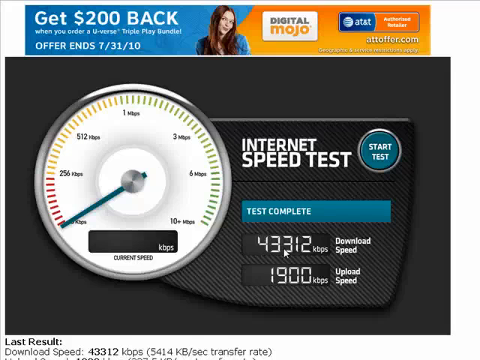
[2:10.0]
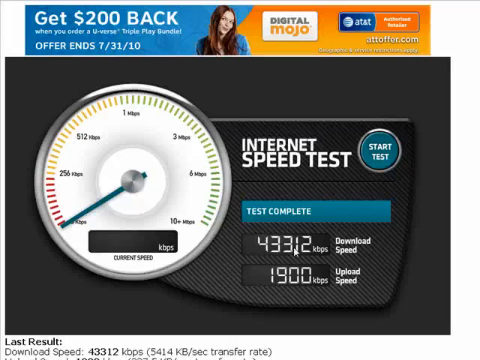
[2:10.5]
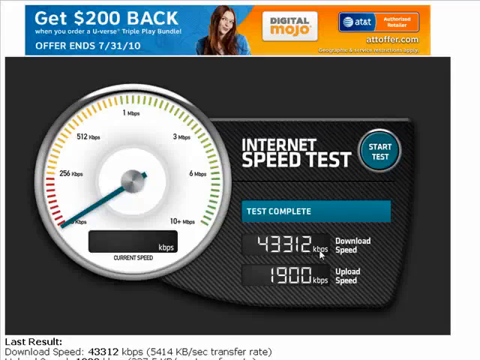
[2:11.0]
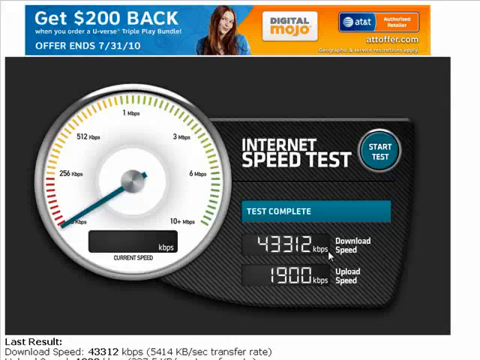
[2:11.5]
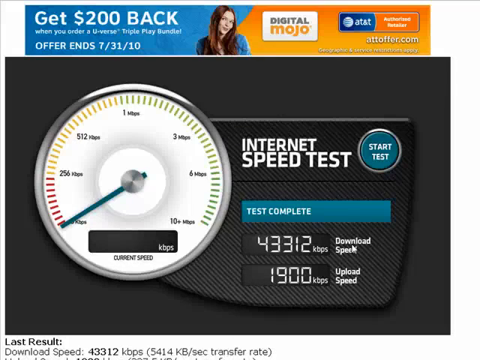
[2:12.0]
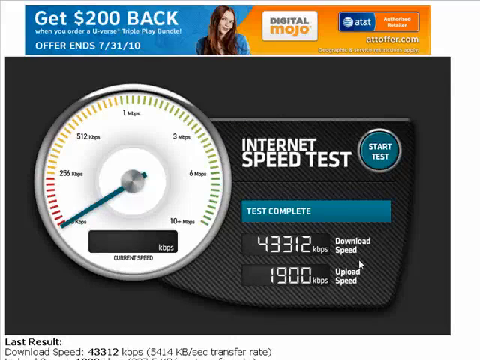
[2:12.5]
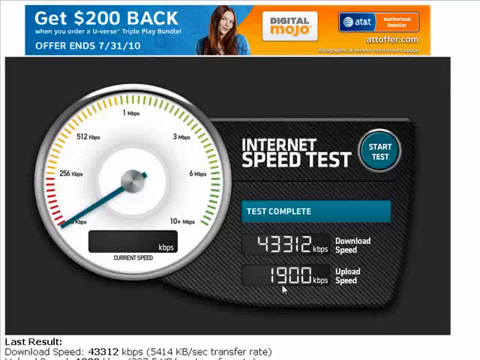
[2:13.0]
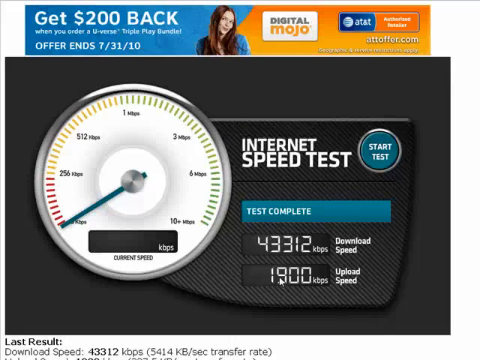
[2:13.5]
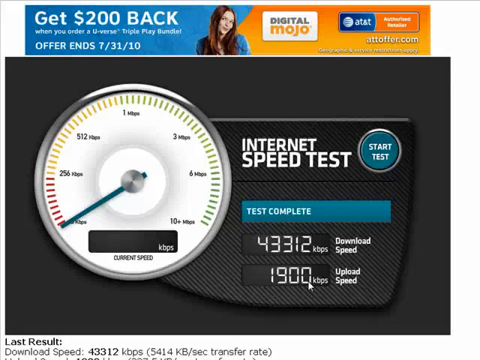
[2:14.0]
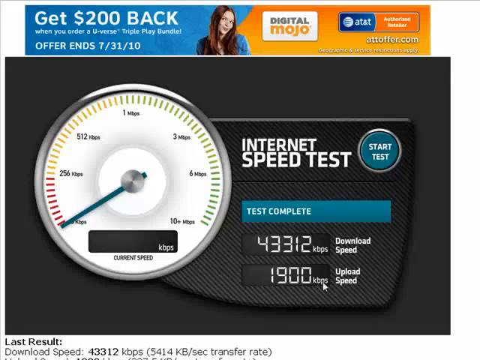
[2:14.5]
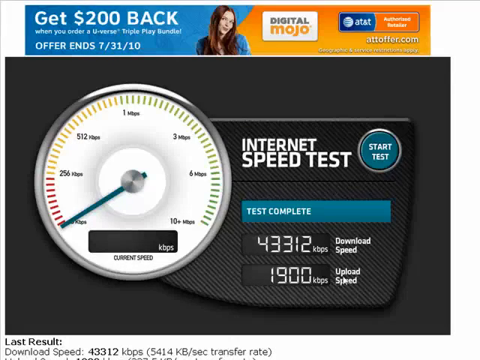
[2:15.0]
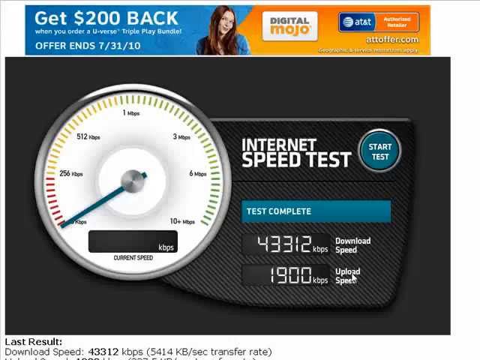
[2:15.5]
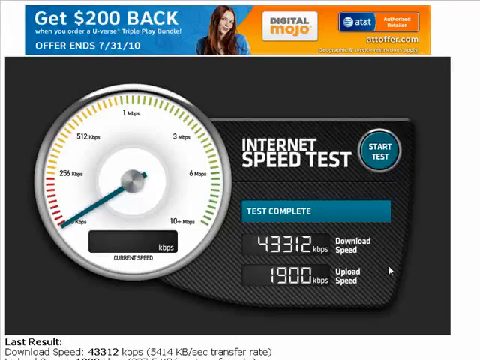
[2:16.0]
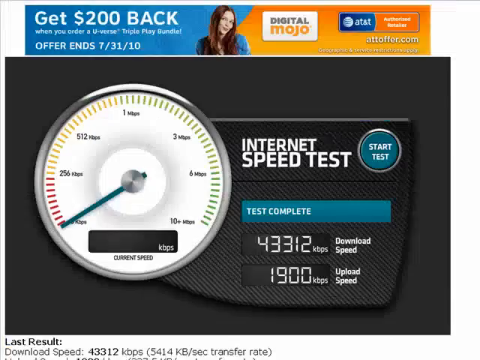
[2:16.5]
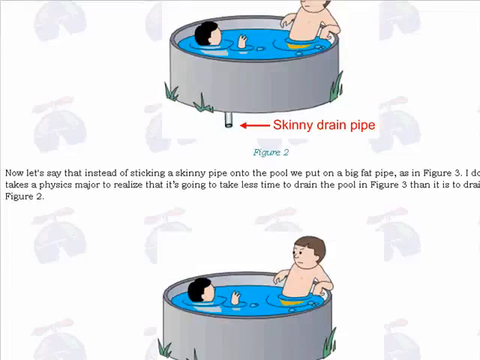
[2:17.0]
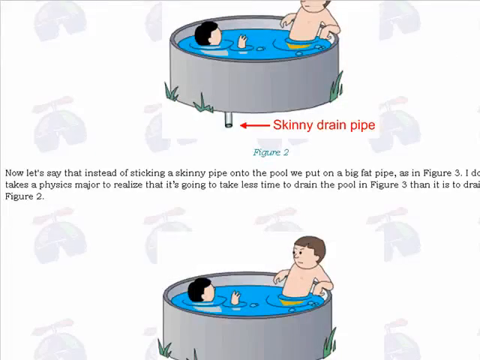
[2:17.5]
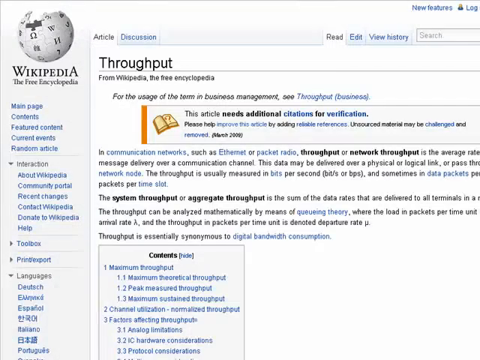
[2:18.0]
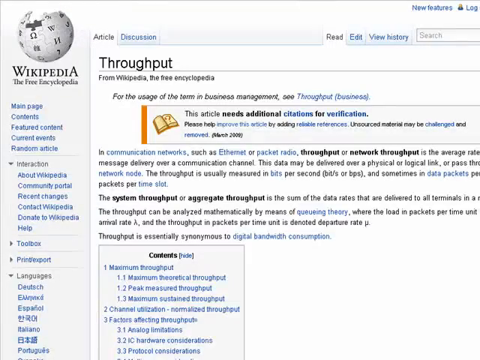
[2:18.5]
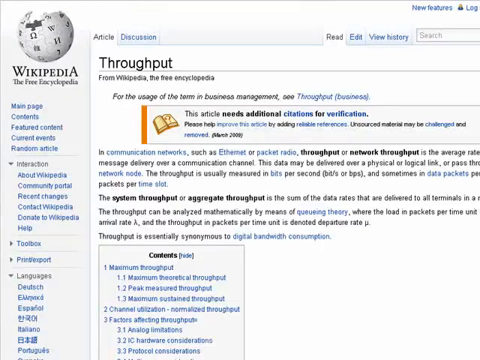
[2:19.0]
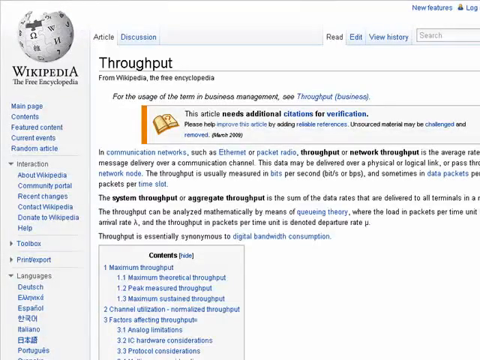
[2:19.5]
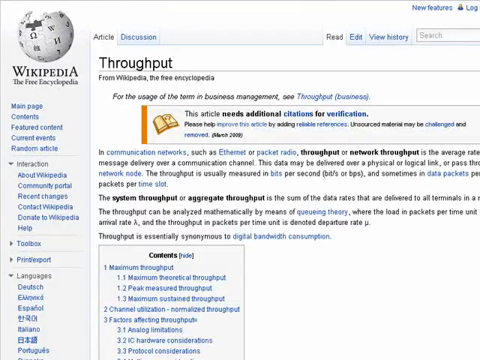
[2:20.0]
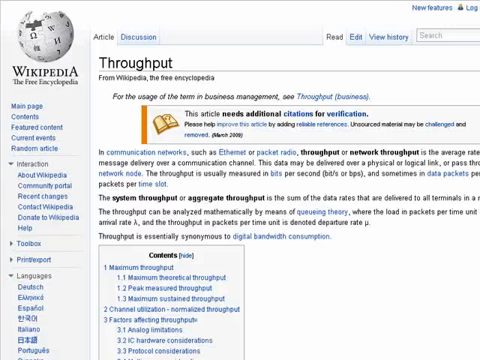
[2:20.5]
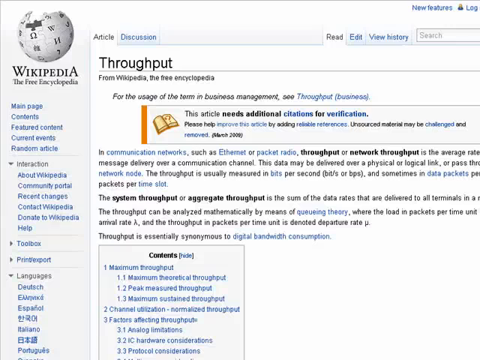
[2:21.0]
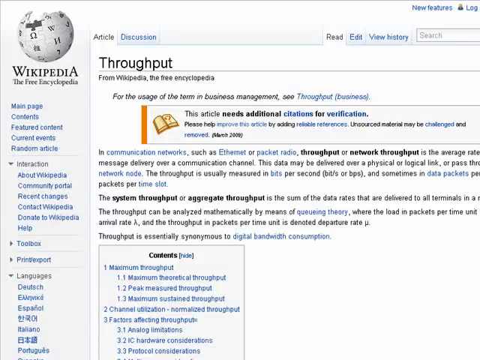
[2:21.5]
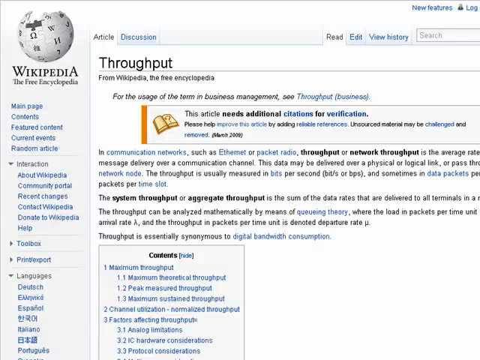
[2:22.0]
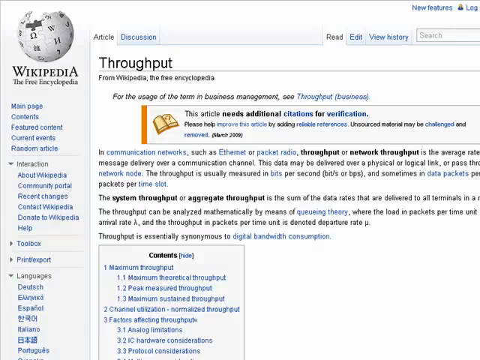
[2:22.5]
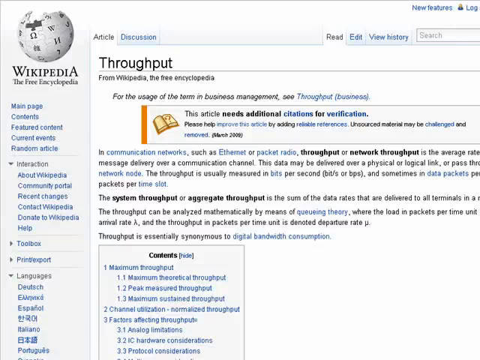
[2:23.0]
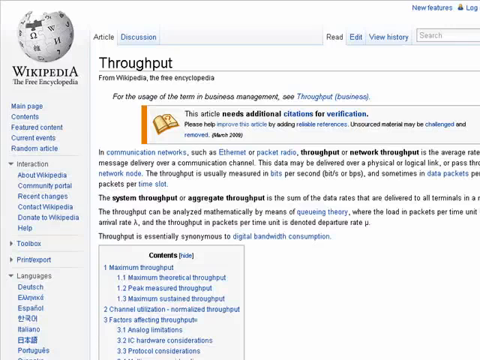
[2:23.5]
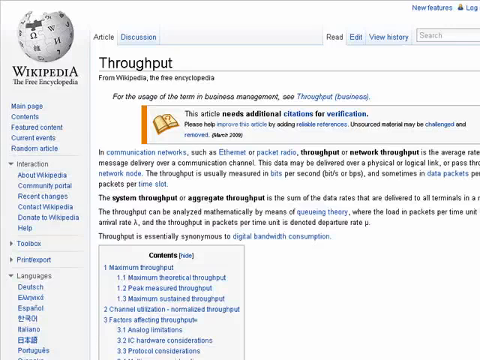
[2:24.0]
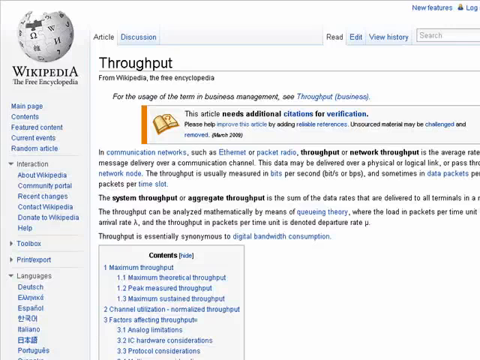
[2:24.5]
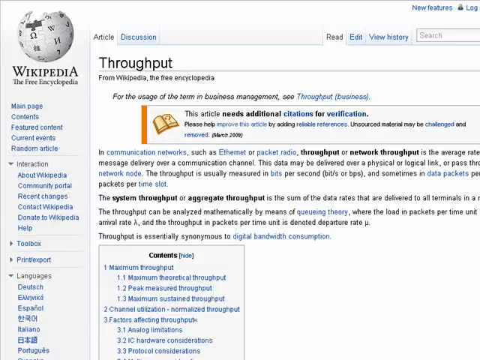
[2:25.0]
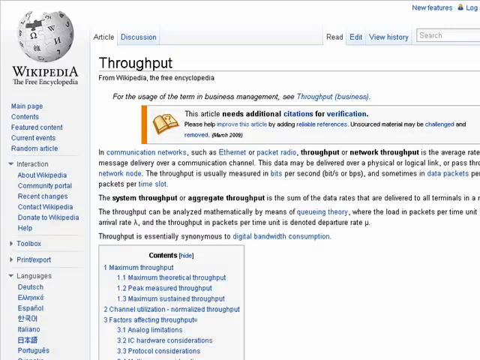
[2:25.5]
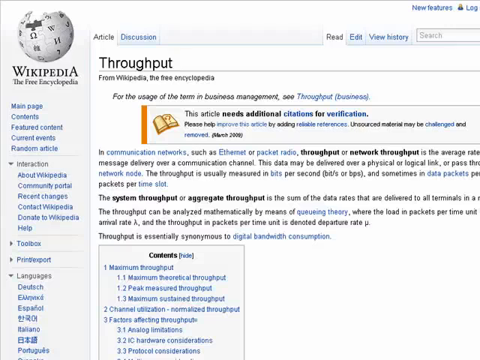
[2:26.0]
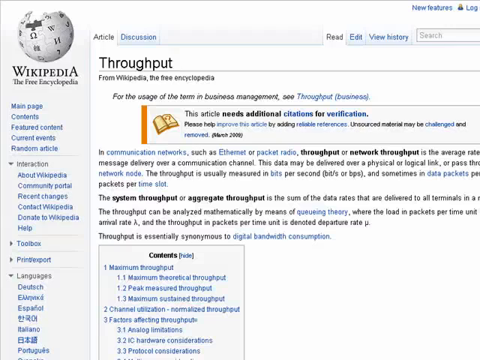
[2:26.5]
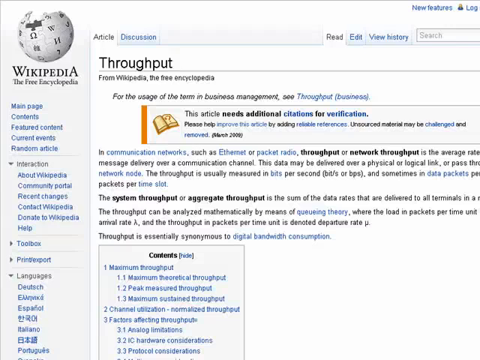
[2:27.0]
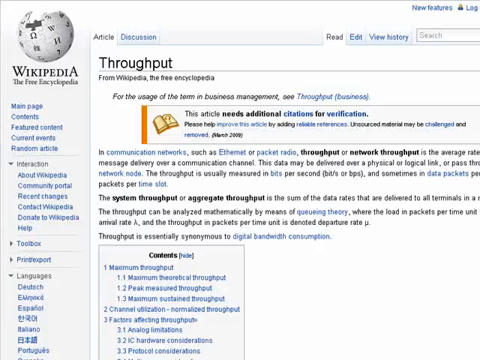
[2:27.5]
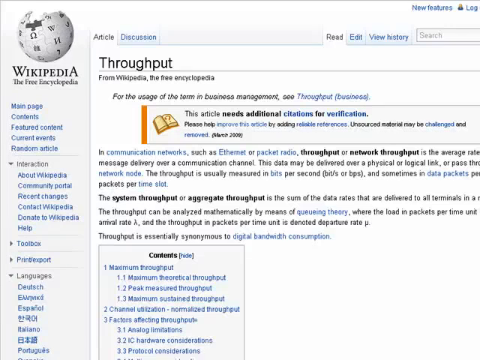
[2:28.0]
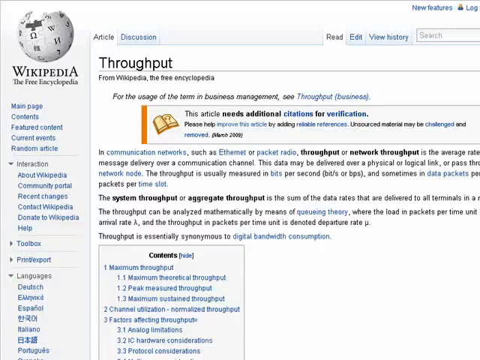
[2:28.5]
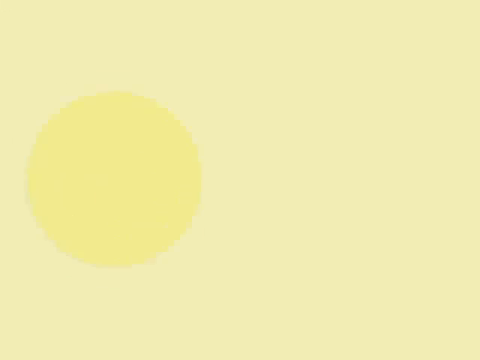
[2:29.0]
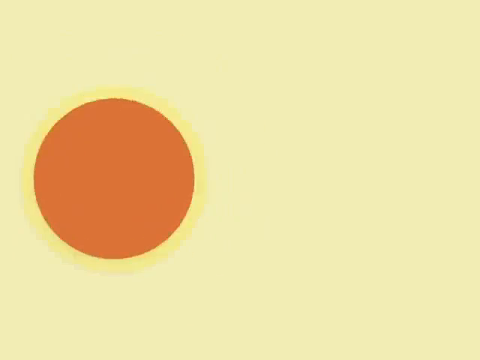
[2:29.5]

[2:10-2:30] The advertisement is still across the top on a white background. Below is a big square right at the left edge, about an inch from the right and the bottom and about two inches from the top, with white background around it and a black square inside. On the left is a big circle like an odometer, silver on the outside and white inside. From left to right its dashes are red, then yellow up to the center, then green the rest of the way around, with black numbers underneath them. Below it is a little screen with "KBPS" in the bottom right corner and "current speed" underneath. On the right side, "internet test speed" is written in white, with a little blue button with a silver border that says "start test." Below that a screen says "test complete," and below it are two screens: the top reads "43,312 KBPS" with "download speed" beside it on the right, and the one below reads "1900 KBPS" with "upload speed." The cursor is on the download speed screen, moves a little to the right to the words "download speed," goes down to the screen reading "1900," and slowly moves until it is right above "upload speed." Then the view scrolls down to the pool, scrolls down some more, and returns to the start of the Wikipedia page with "throughput" at the top.